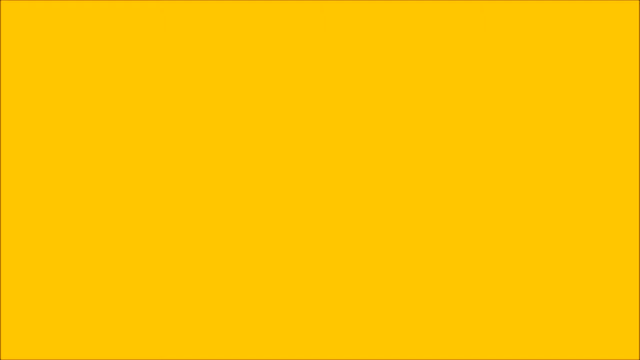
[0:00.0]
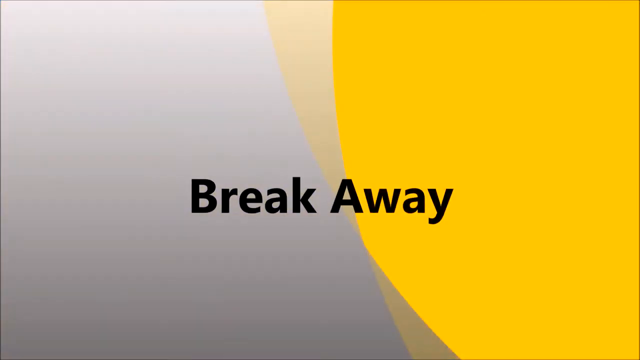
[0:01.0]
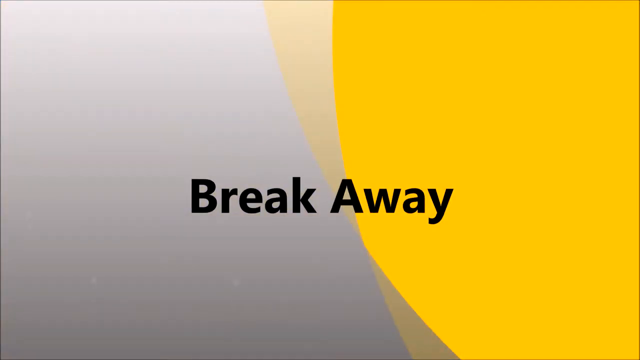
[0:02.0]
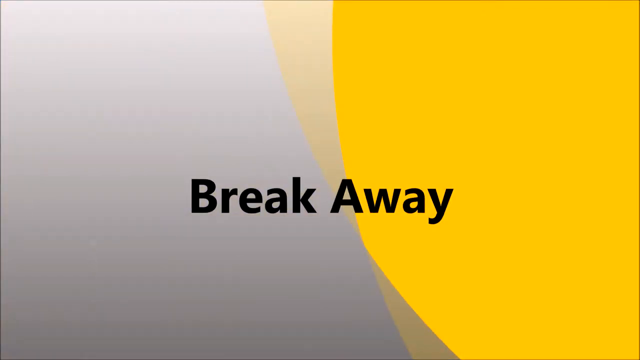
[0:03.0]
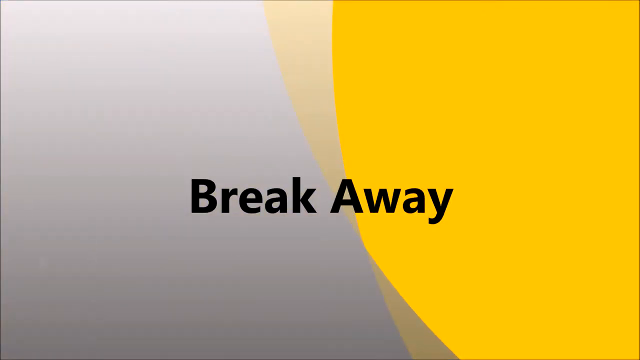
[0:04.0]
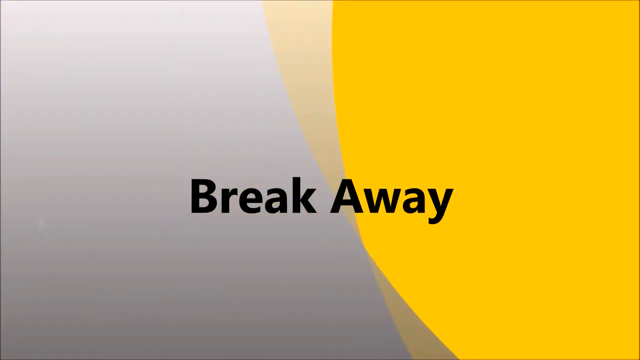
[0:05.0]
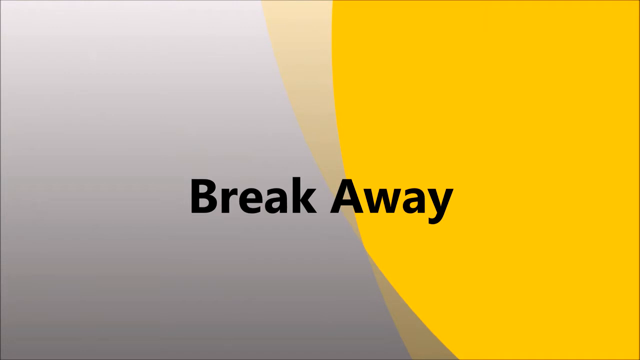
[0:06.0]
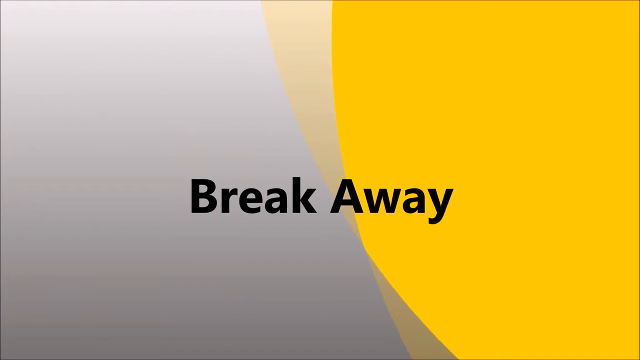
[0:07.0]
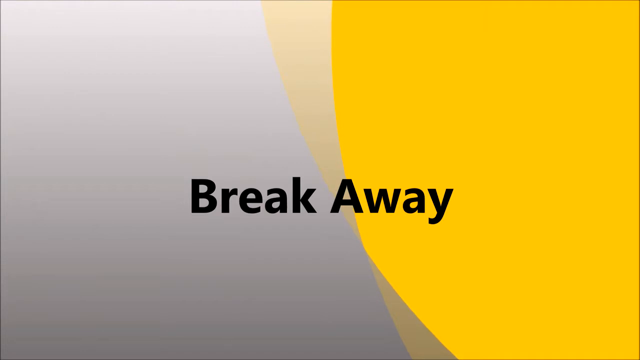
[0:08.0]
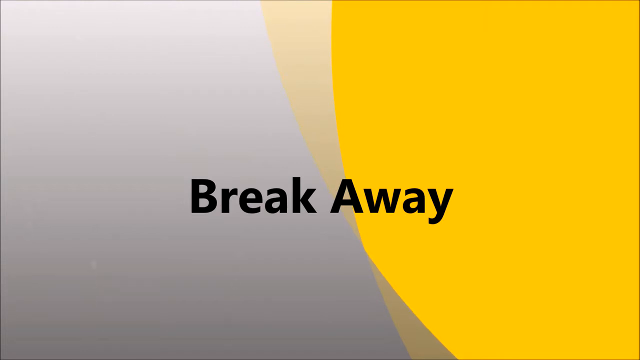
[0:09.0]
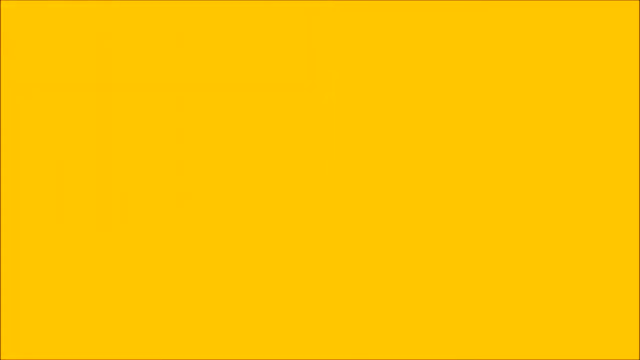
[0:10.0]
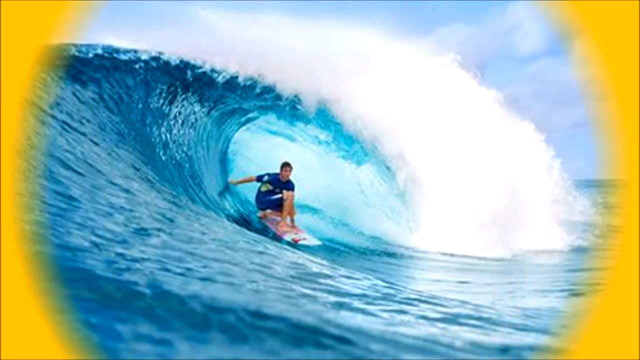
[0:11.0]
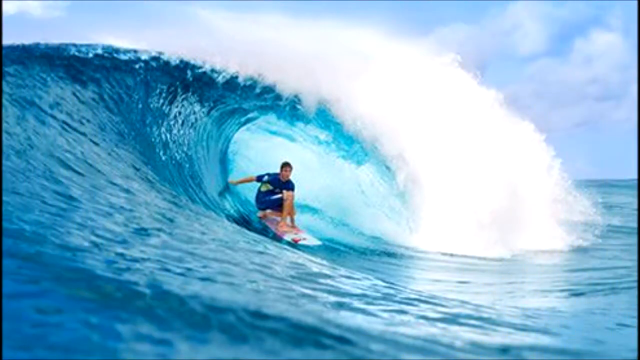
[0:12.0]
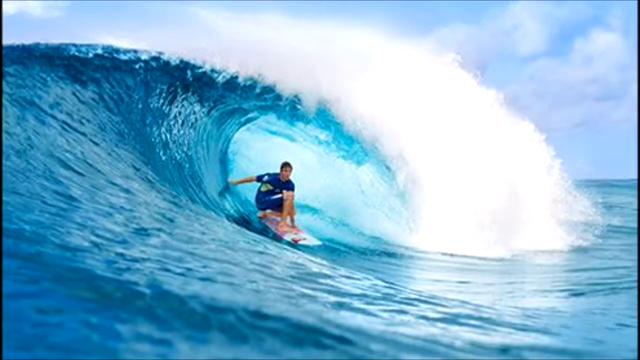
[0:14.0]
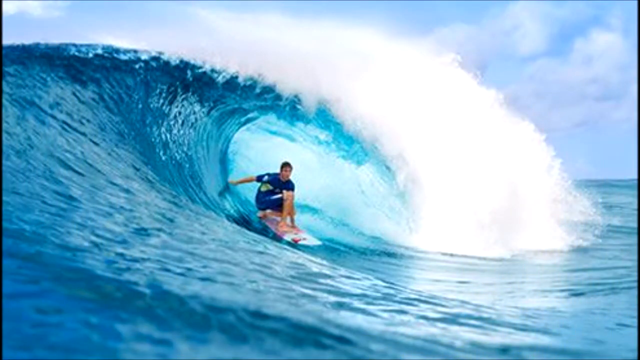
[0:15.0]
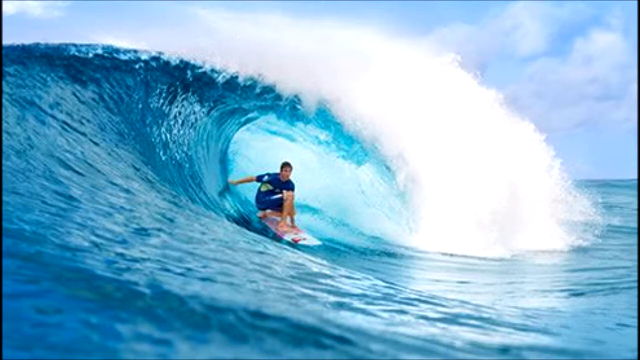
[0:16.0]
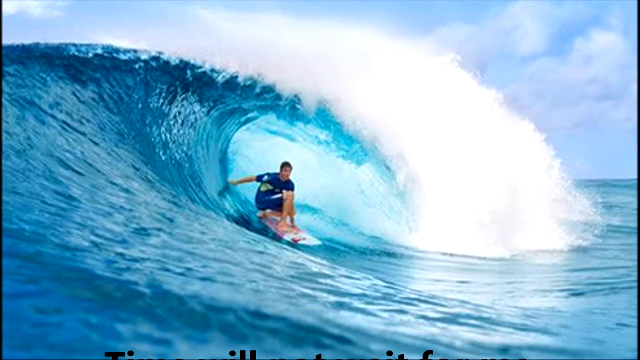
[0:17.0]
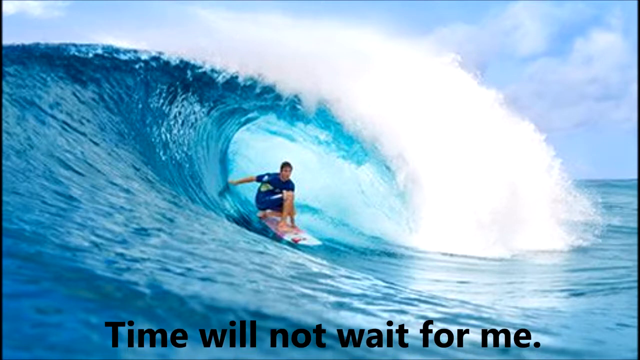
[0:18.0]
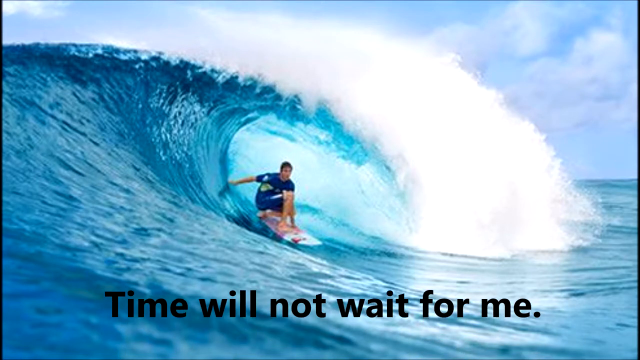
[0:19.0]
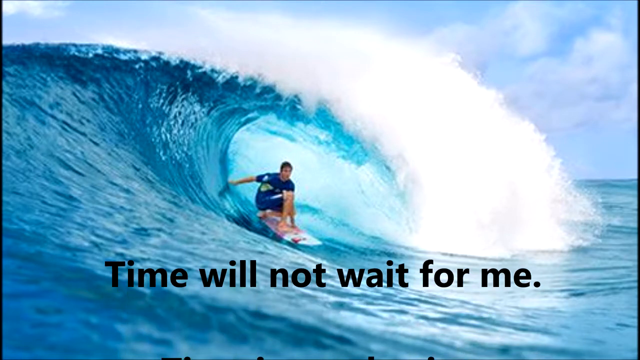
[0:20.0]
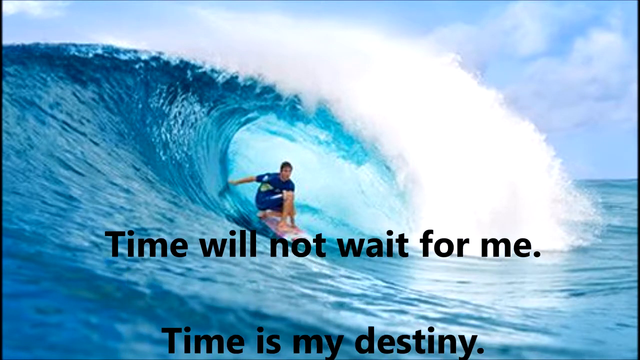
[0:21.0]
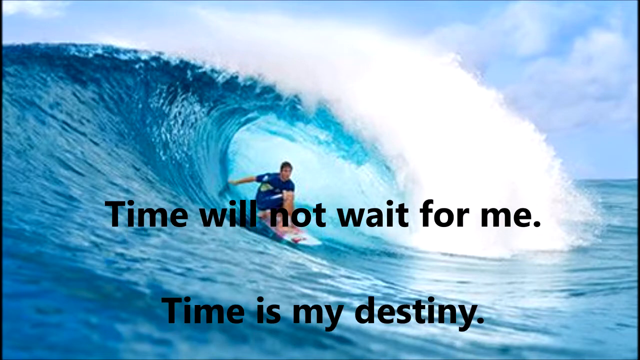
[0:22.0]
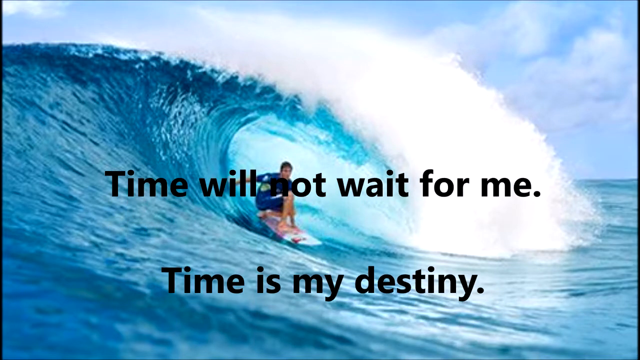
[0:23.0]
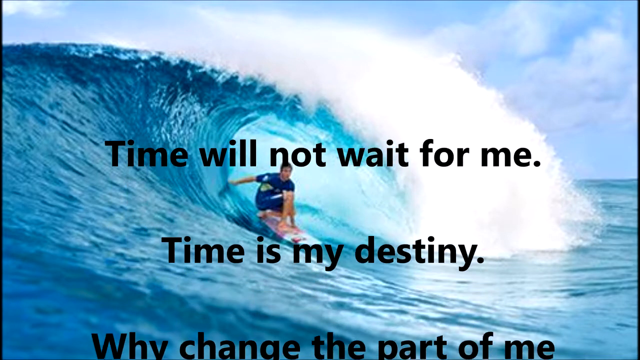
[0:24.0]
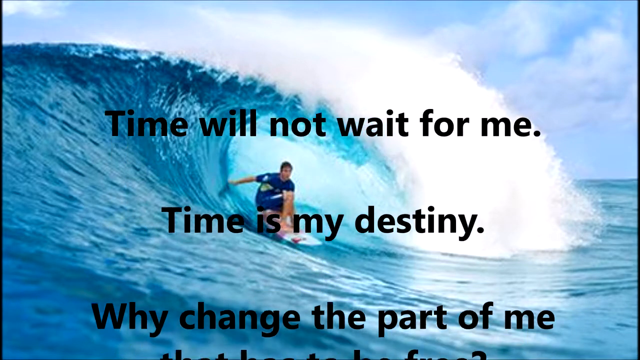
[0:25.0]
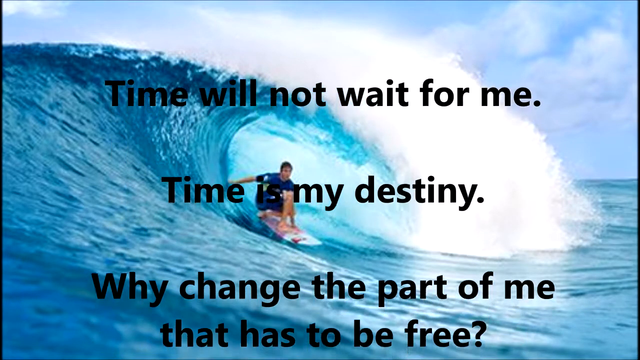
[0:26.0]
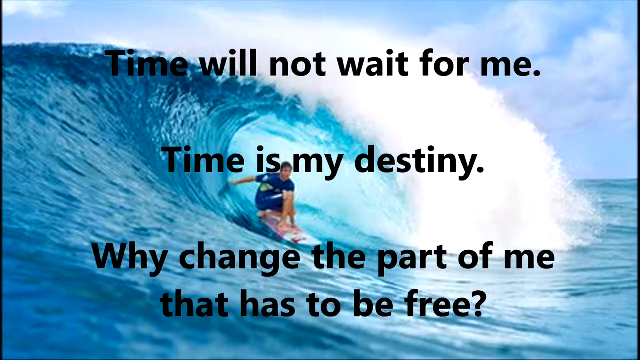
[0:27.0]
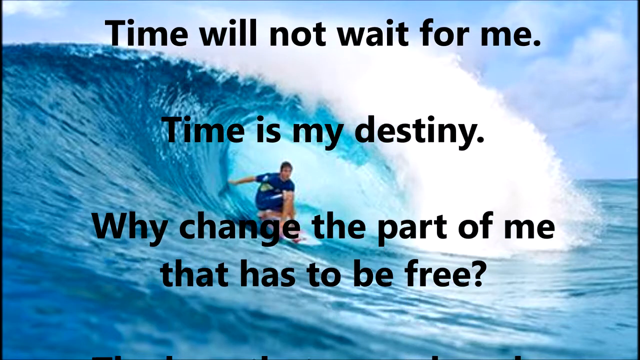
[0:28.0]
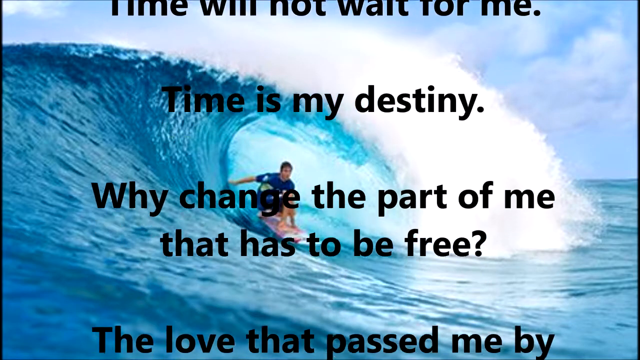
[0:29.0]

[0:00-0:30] The video opens on a slideshow screen that is half gray and half bright yellow, with black text in the middle reading "break away." This stays on screen for a few seconds, then turns into a yellow screen that opens up a circular opening to reveal a picture of a surfer riding a wave. He is crouched down on his surfboard, and the wave curls above his head. From the bottom of the screen, text pops up reading "time will not wait for me. Time is my destiny. Why change the part of me that has to be free?" There appears to be one more line, but it is cut off. The surfboard picture is fairly close up: the surfer's face is visible, and he wears a blue shirt and blue shorts. A blue sky with clouds is over the top of the wave he is riding through.